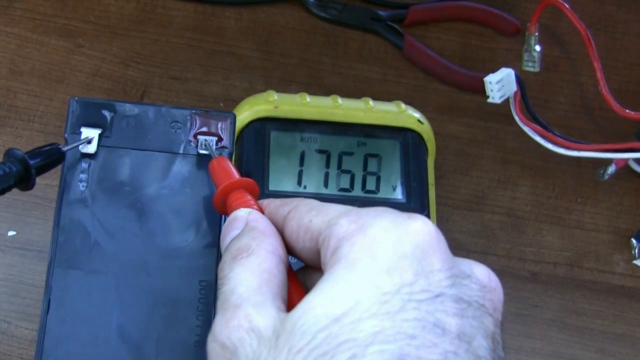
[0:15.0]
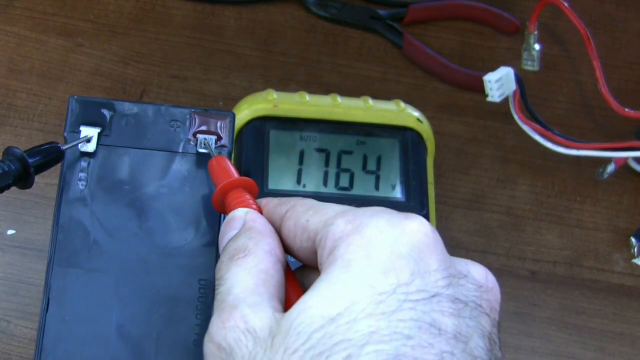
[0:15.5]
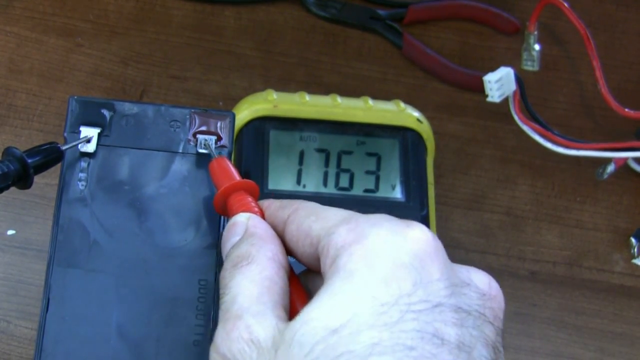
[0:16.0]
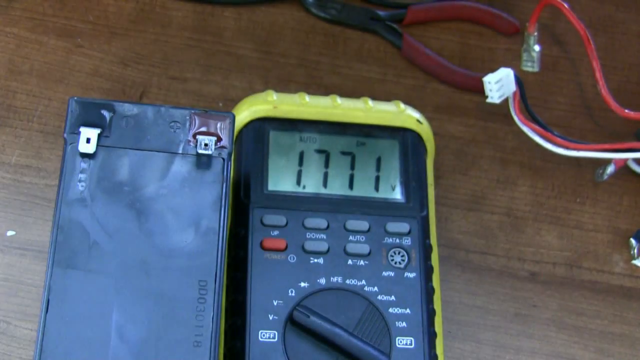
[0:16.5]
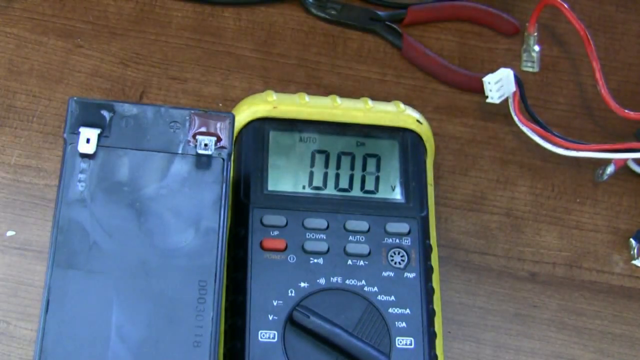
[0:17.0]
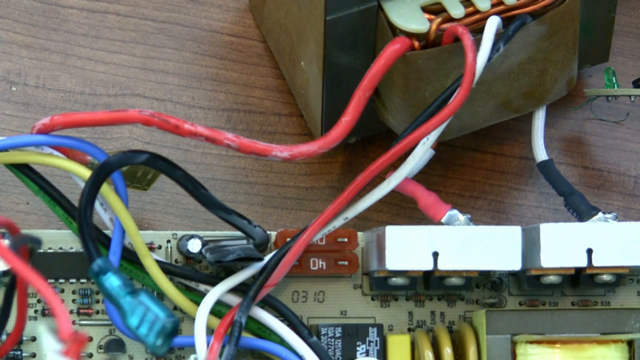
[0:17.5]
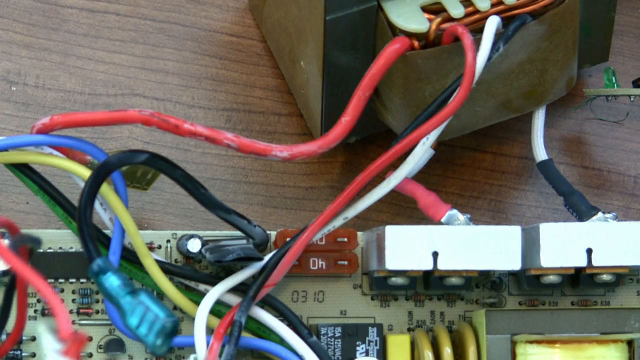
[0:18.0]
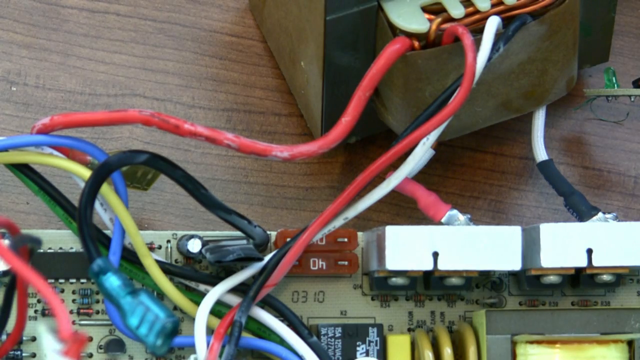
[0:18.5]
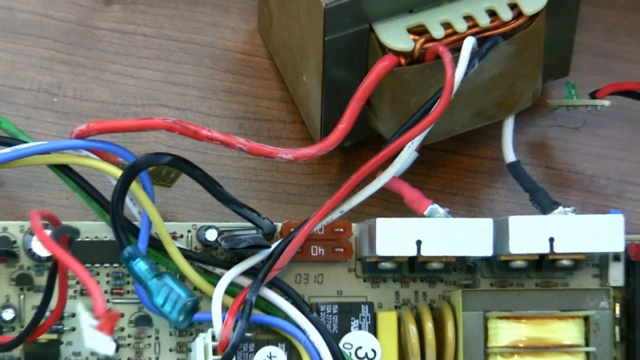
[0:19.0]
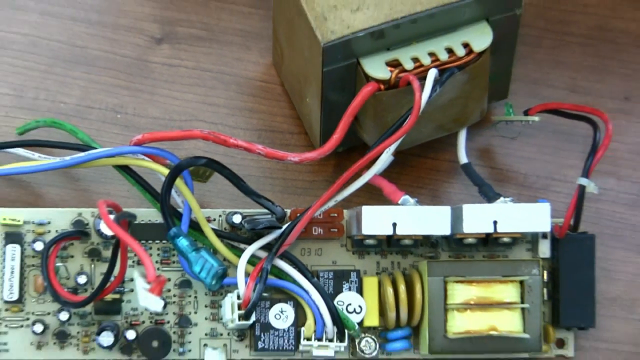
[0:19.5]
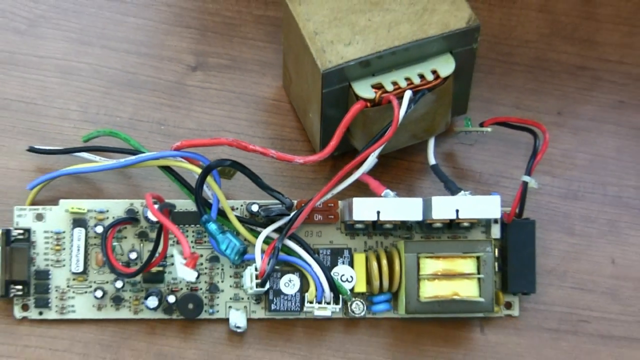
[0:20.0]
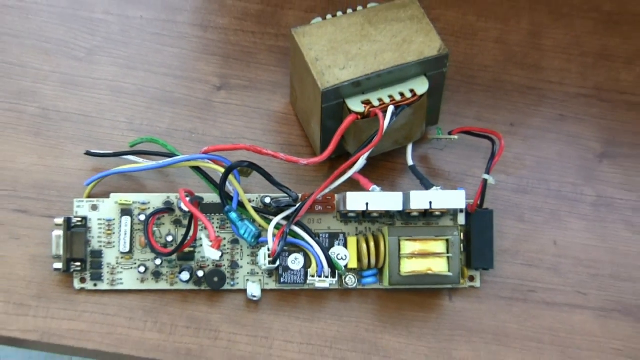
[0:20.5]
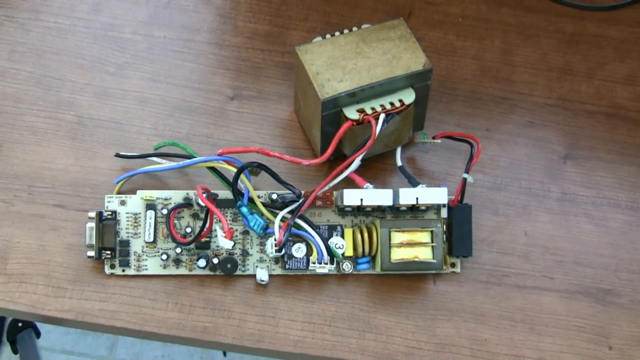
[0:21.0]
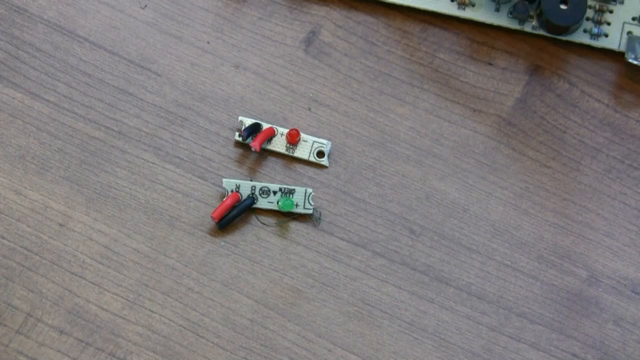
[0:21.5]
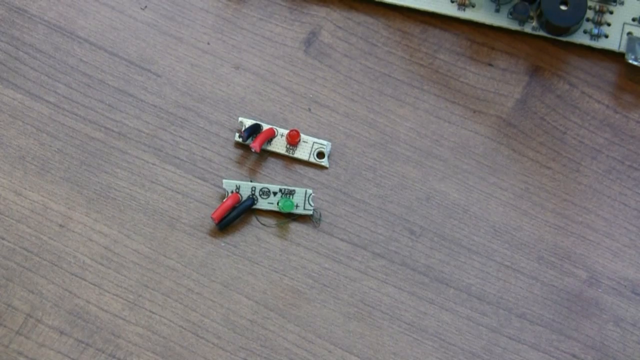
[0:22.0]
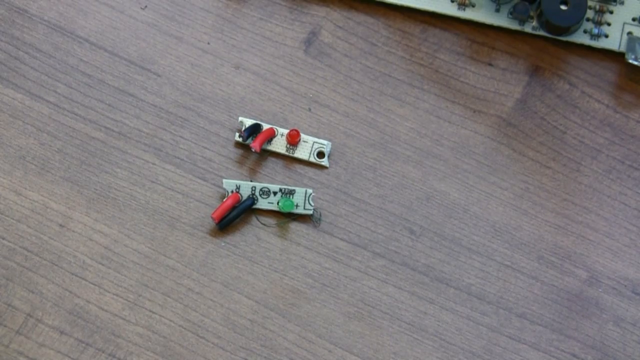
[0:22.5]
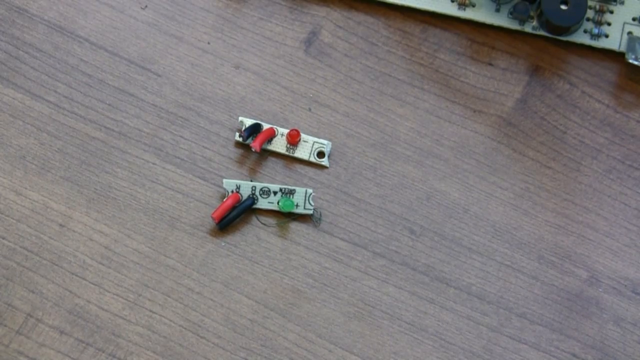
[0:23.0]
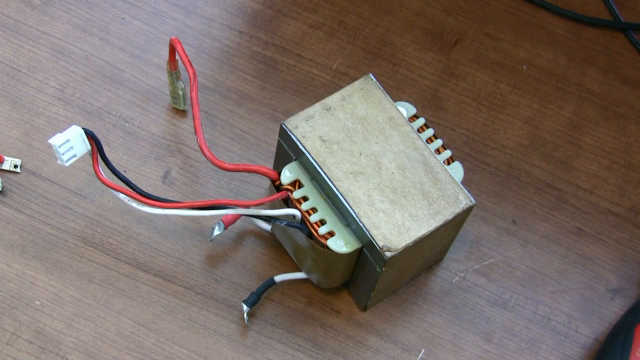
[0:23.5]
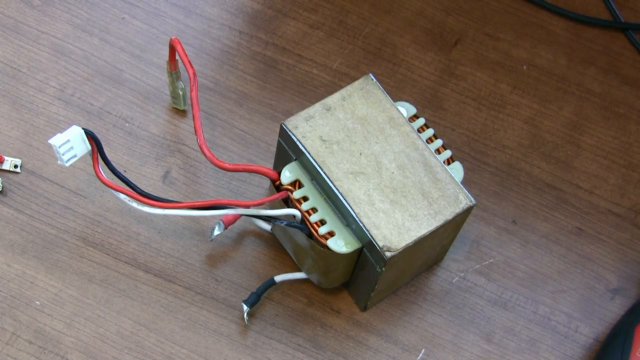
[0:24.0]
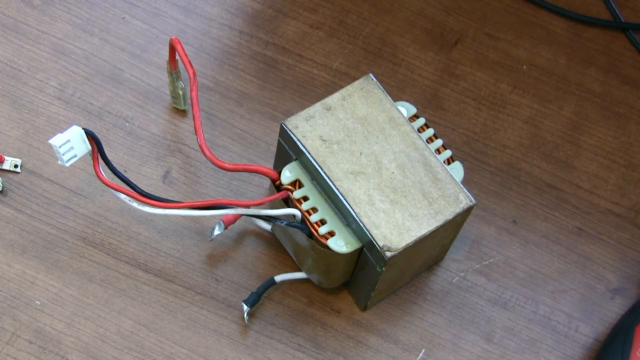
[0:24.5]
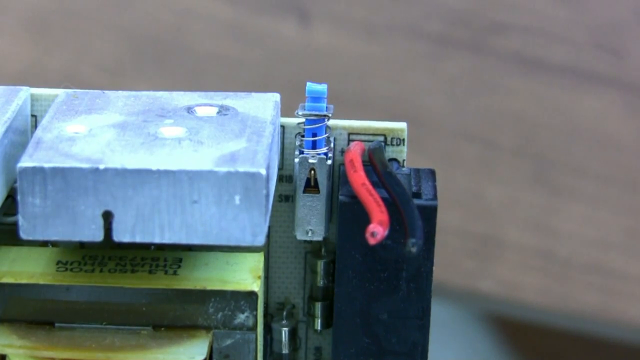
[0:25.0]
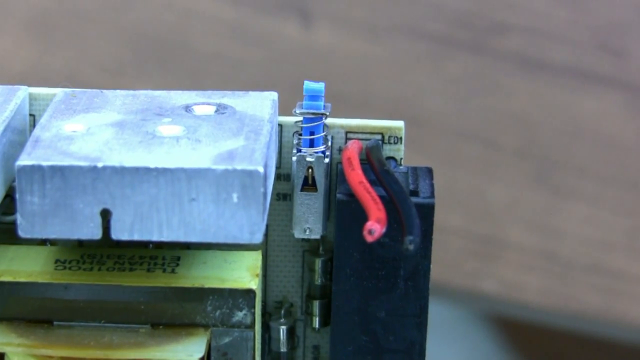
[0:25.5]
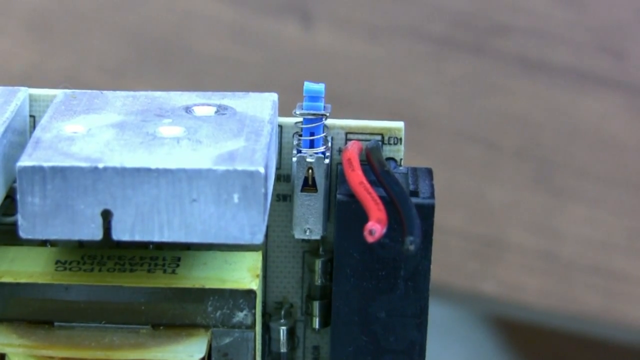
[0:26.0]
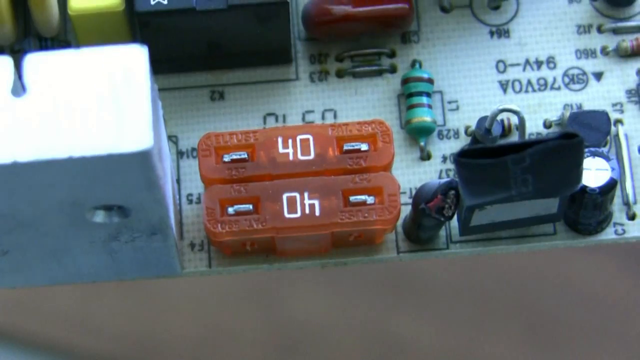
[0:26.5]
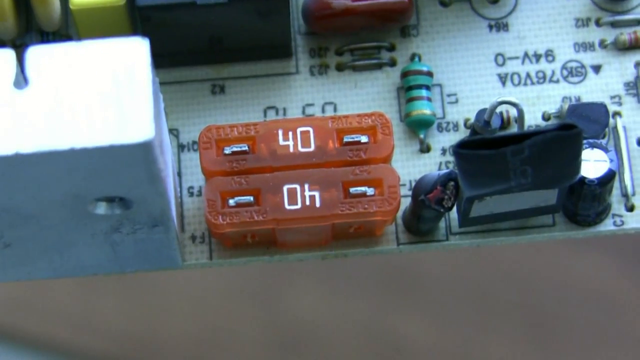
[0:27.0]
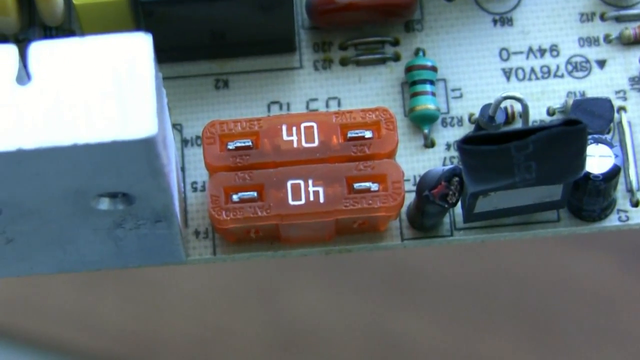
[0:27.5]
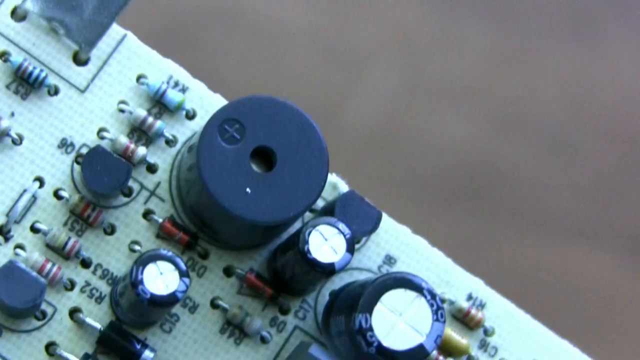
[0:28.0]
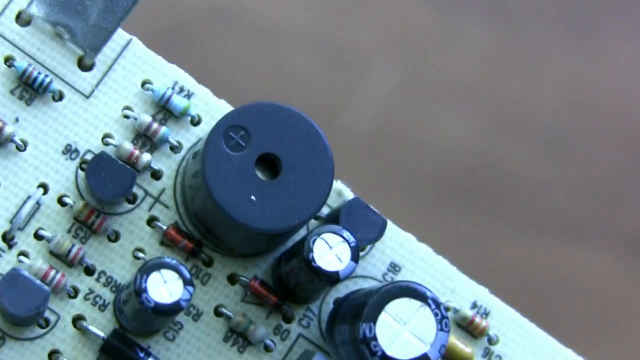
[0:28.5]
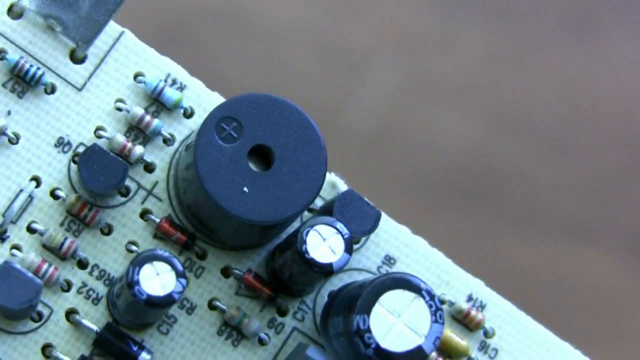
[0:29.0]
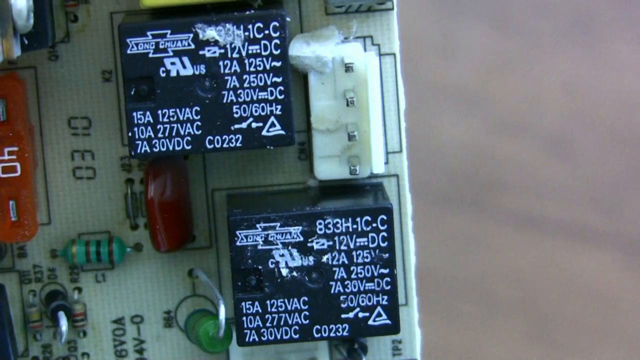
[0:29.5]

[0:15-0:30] A voltage tester has one black handle and one green handle. A series of wires comes out of a component of the power supply. Smaller red and black components are on a table; one has a green light and the other has a red light. A brick-like piece of equipment sits on another piece of equipment that has a yellow band around it. A spring-loaded piece of equipment has a blue switch on it. Black and yellow and black and red wires come out of what looks like a piece of foam. Two orange pieces of plastic sit on a circuit board that has a green and black piece of equipment on it. A circuit board shows a plus sign and several battery components.